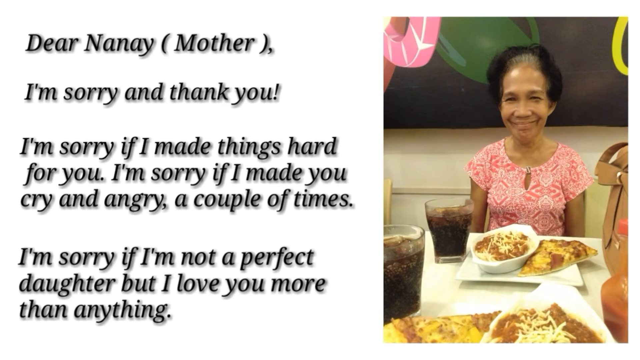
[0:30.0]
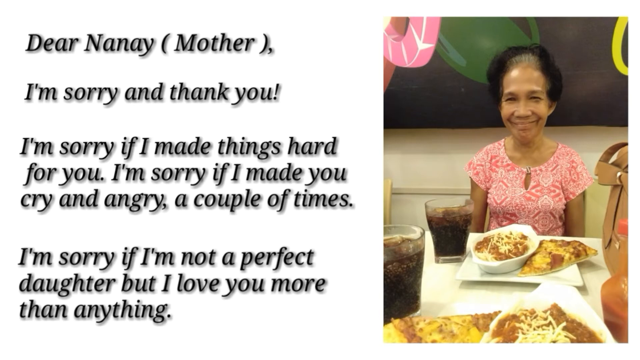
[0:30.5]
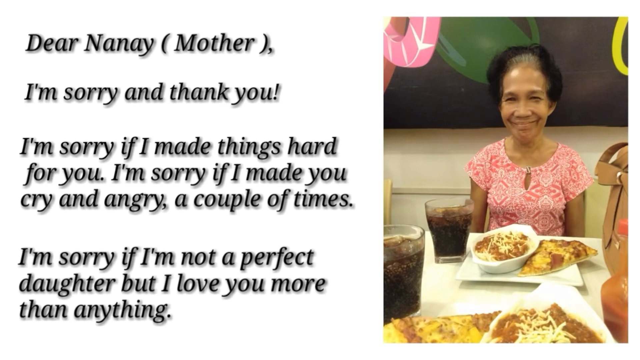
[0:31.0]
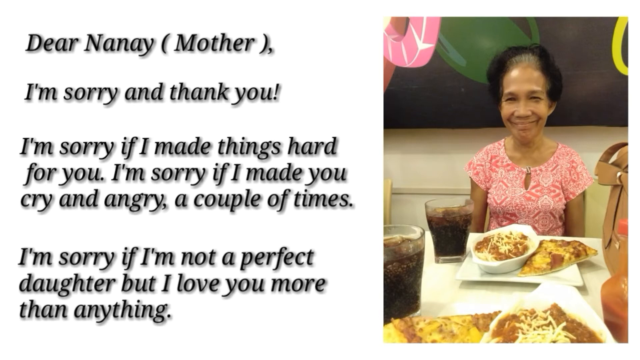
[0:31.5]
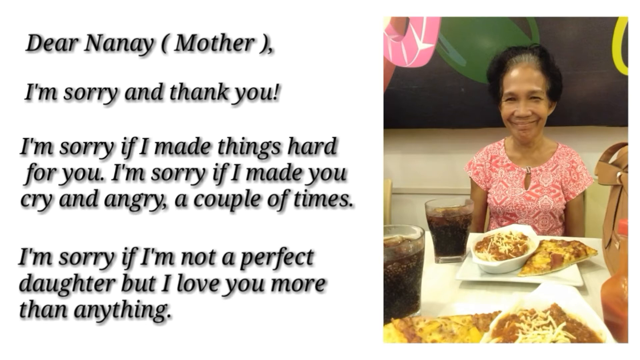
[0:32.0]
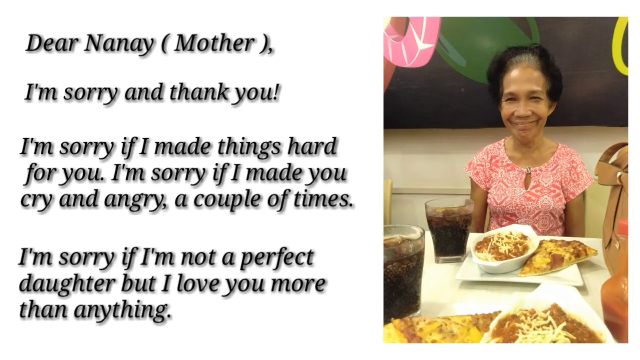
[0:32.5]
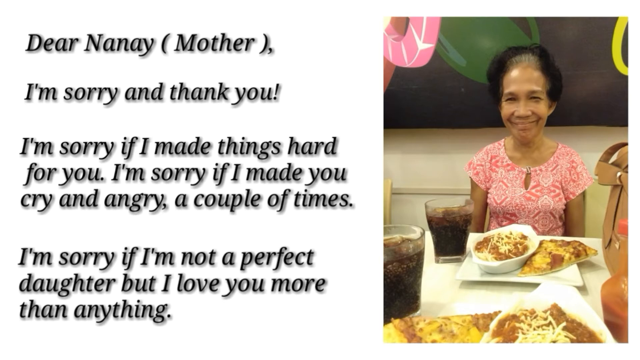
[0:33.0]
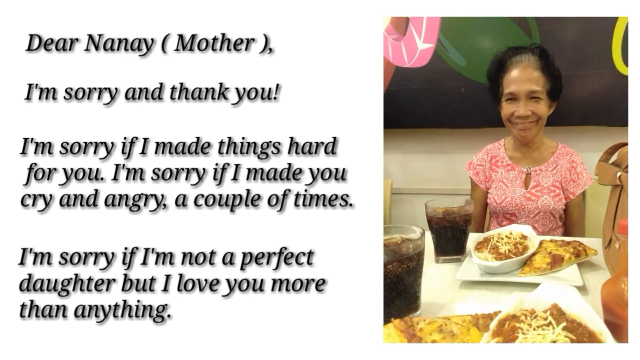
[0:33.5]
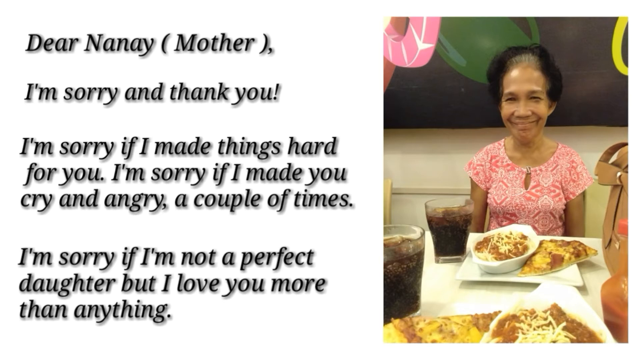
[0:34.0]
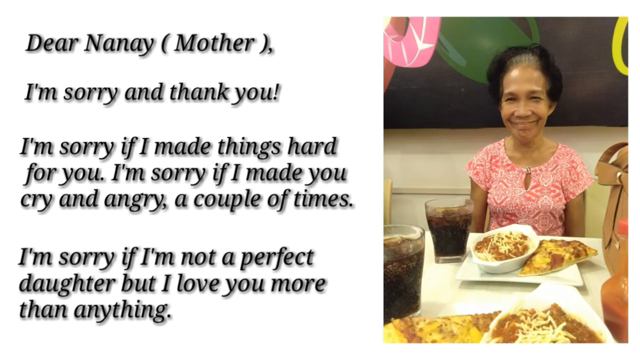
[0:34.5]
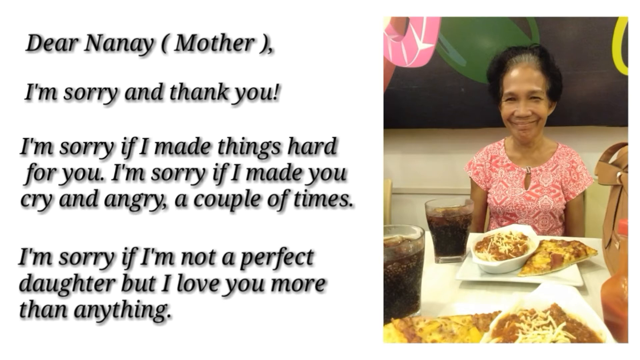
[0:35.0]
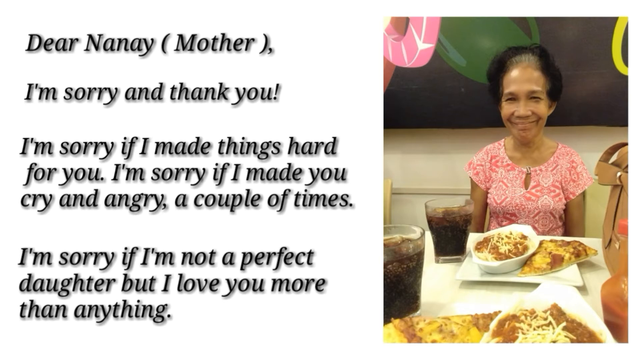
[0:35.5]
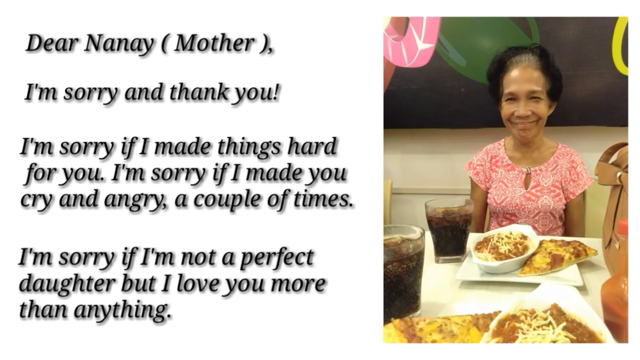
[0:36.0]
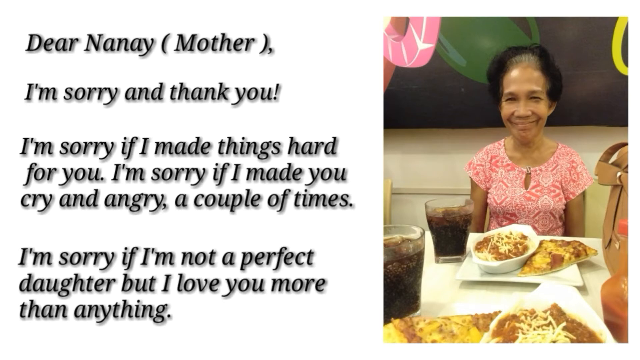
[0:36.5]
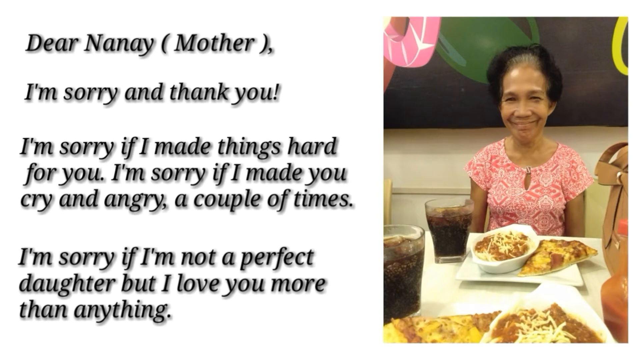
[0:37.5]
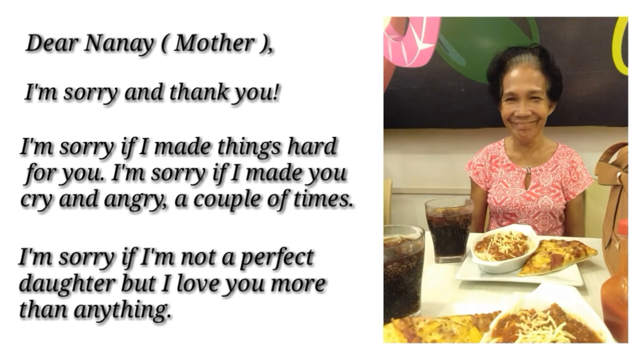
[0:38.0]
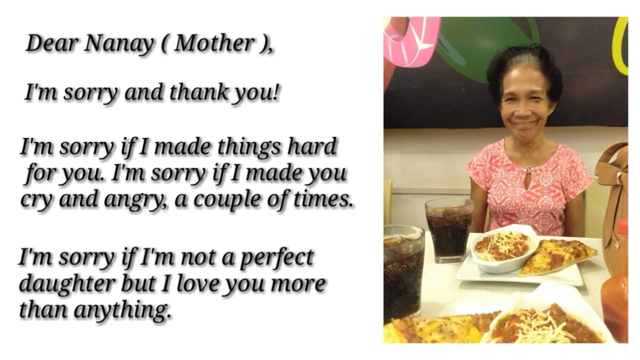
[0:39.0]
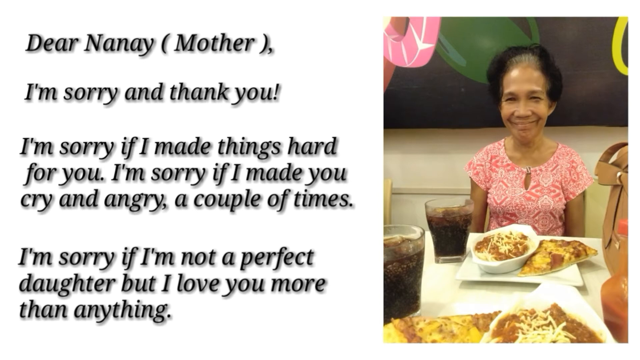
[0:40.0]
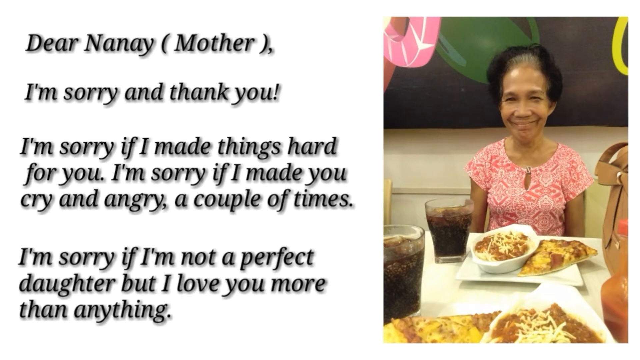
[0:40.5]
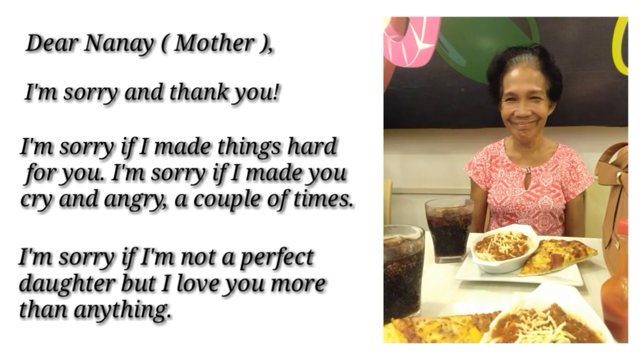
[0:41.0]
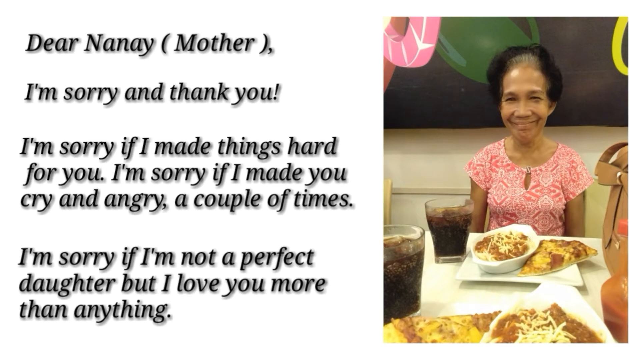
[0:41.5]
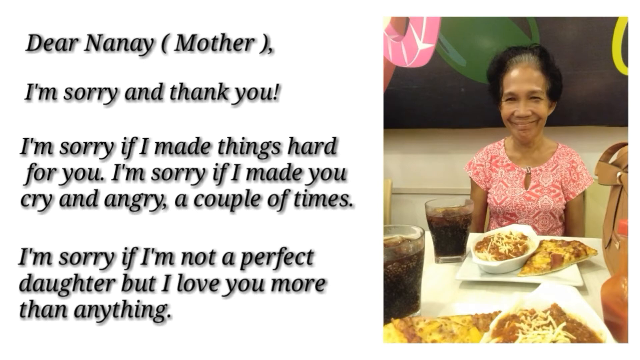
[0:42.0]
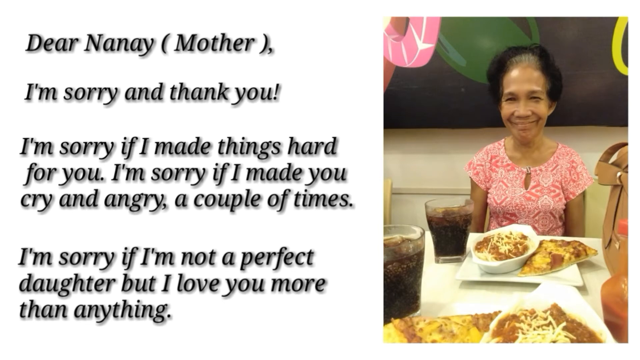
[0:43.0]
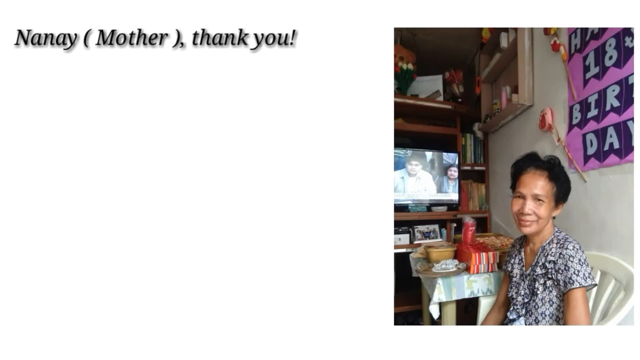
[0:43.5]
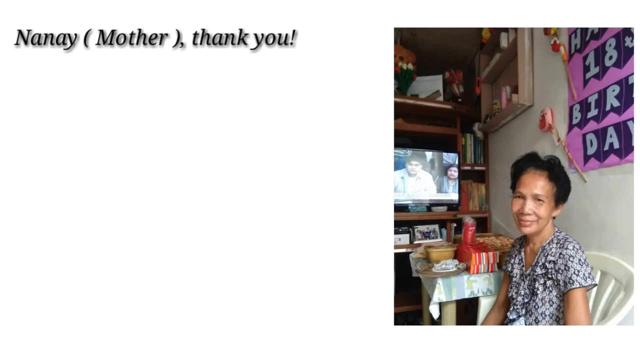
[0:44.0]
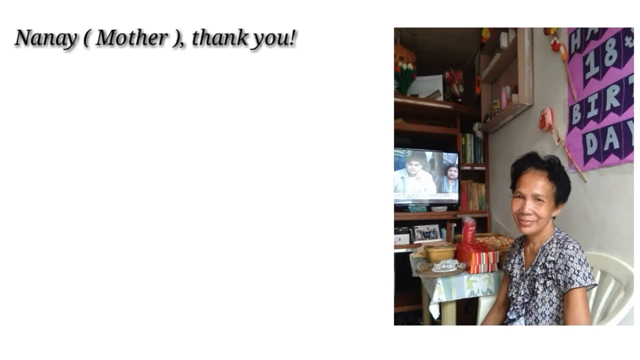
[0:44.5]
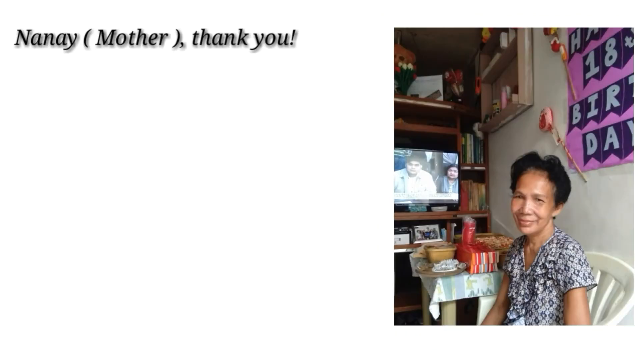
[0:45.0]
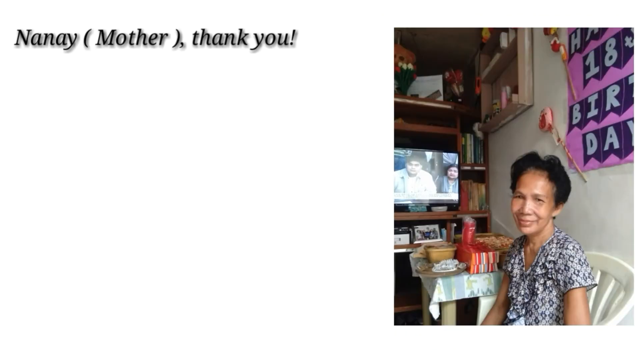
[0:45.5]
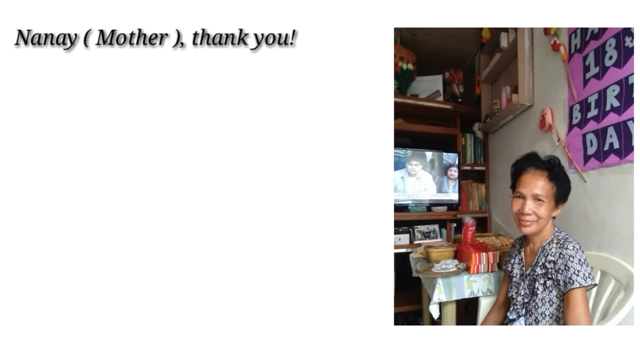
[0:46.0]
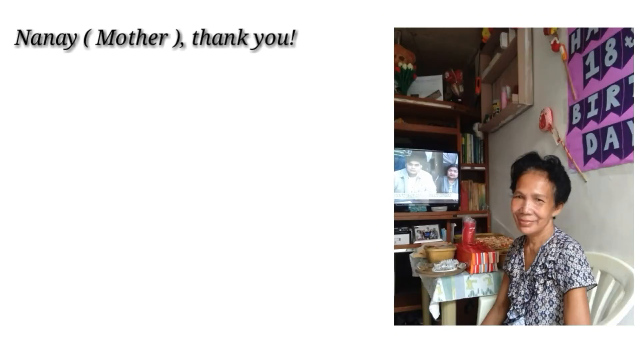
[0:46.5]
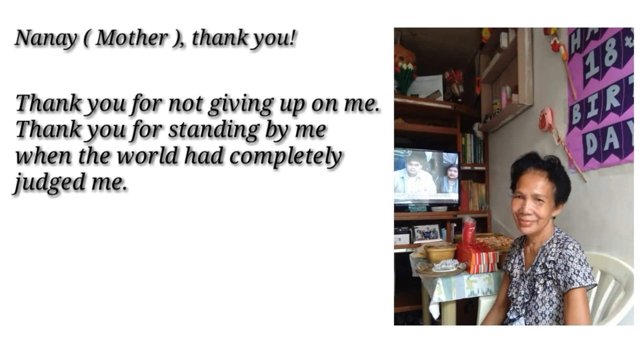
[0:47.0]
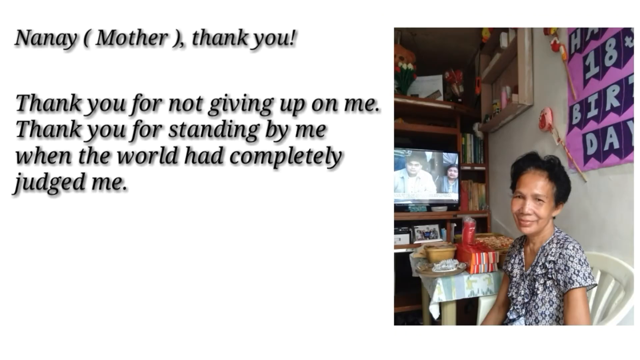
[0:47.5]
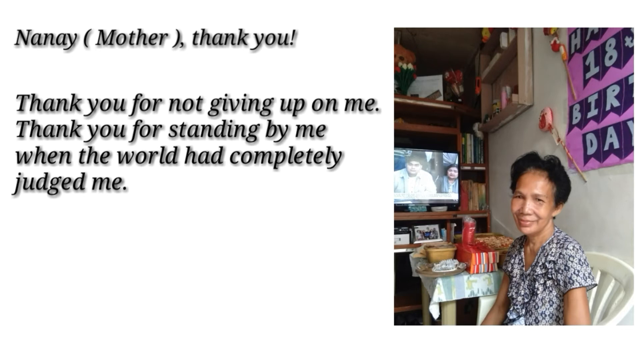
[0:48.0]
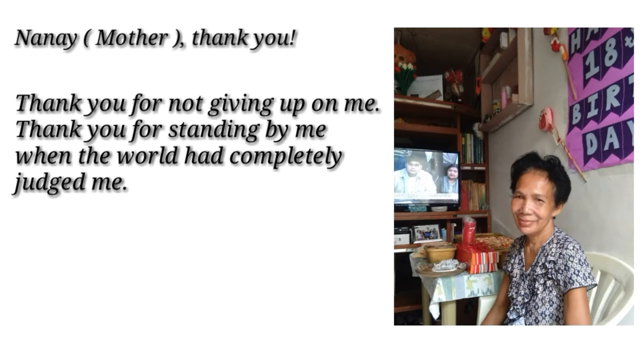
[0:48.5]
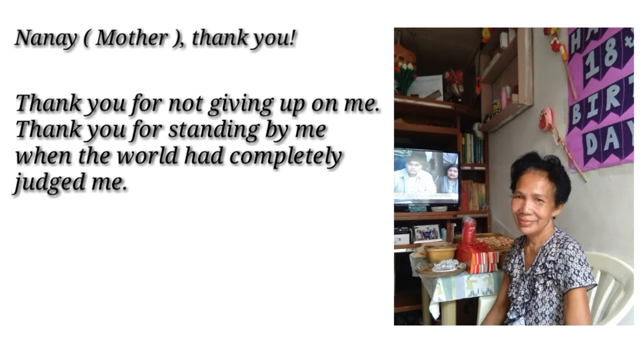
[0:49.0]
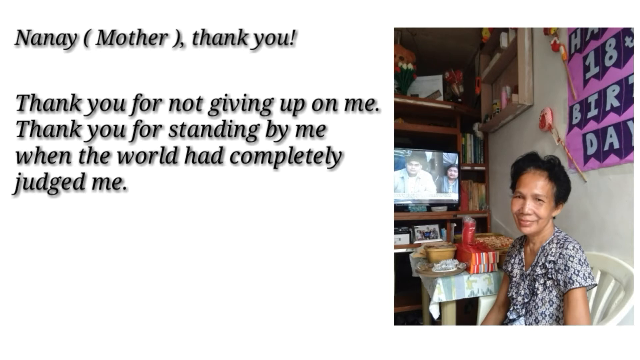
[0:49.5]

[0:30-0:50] A woman looks sweet and is smiling, wearing a dress that looks very good. The women appear to be having an Italian dinner and enjoying each other's company. They seem to be drinking soft drinks, with no alcohol visible. There appears to be a purse on the right, and an unidentified painting hangs in the background. She looks like she is enjoying her time and is very happy.